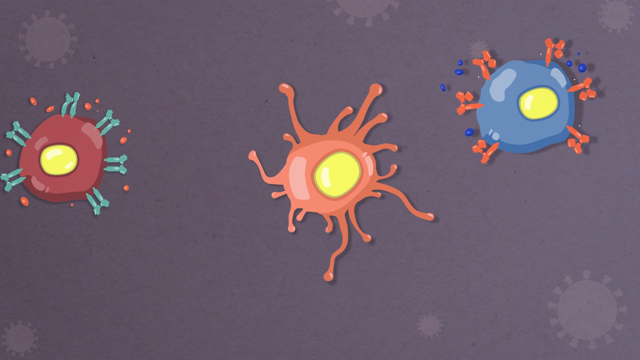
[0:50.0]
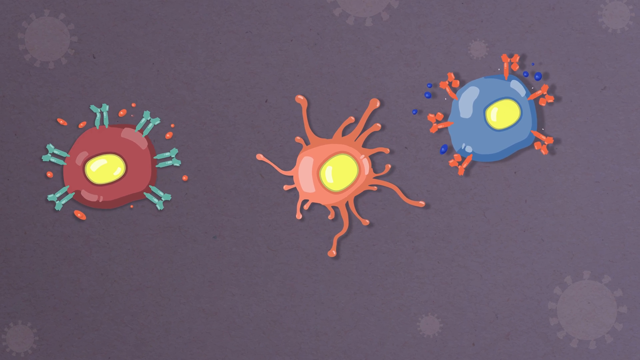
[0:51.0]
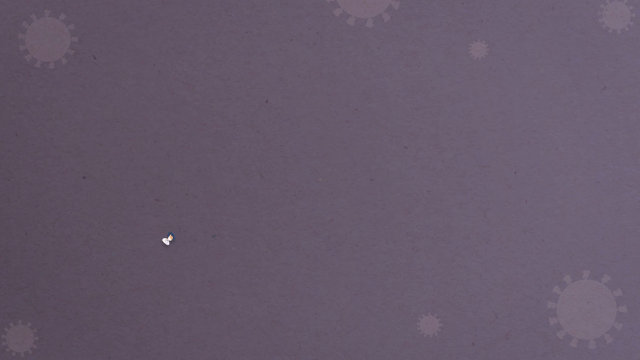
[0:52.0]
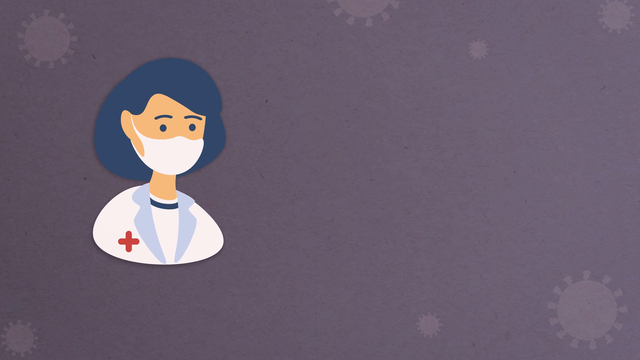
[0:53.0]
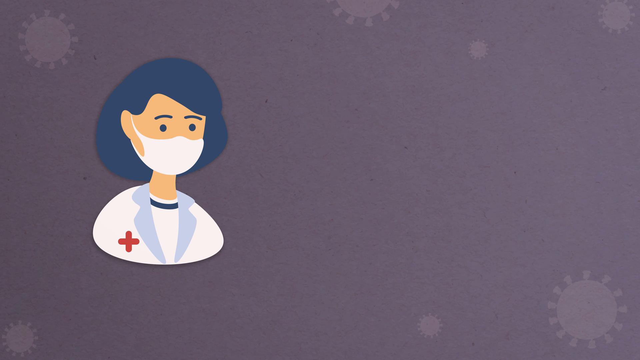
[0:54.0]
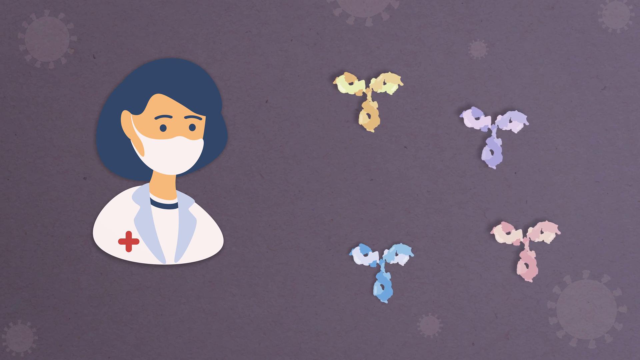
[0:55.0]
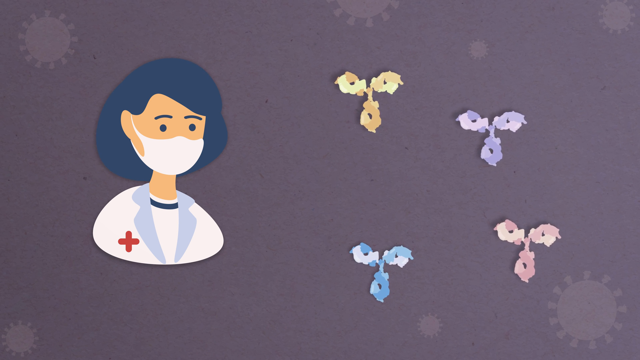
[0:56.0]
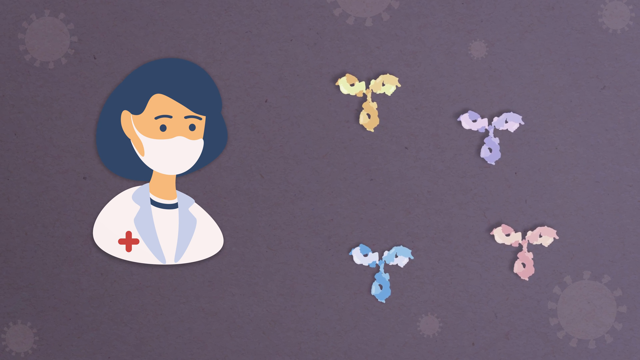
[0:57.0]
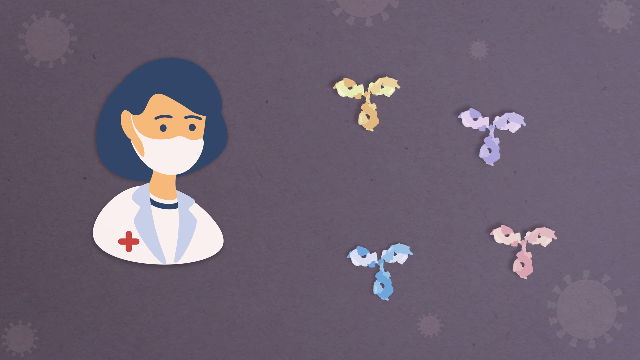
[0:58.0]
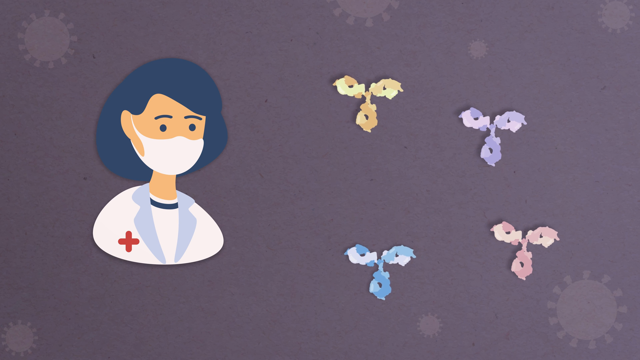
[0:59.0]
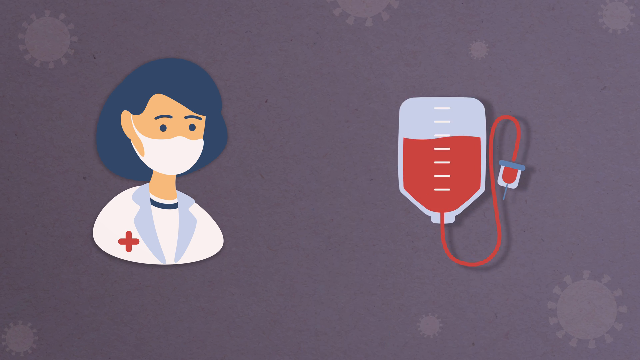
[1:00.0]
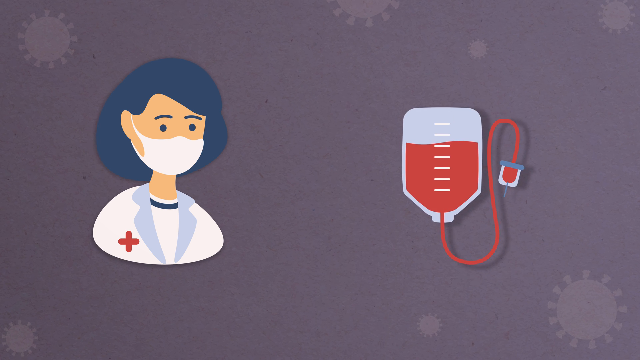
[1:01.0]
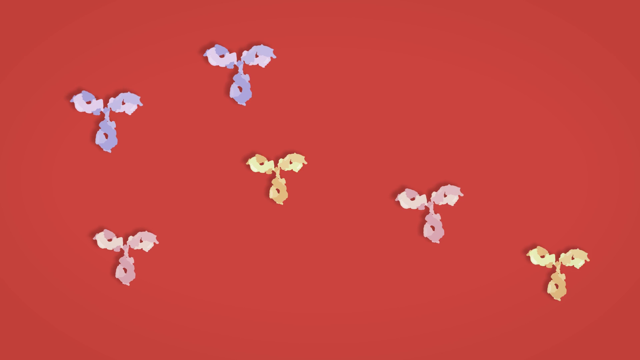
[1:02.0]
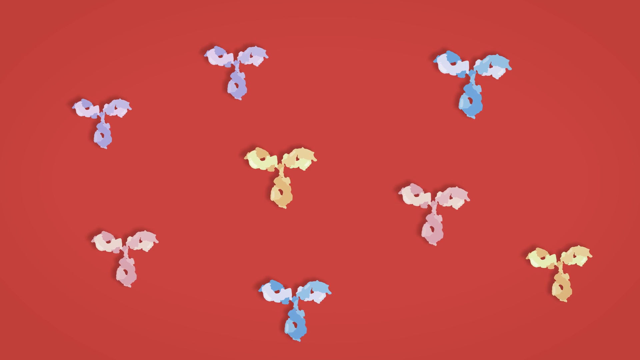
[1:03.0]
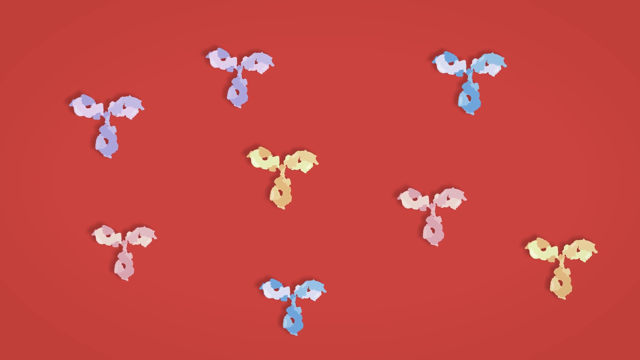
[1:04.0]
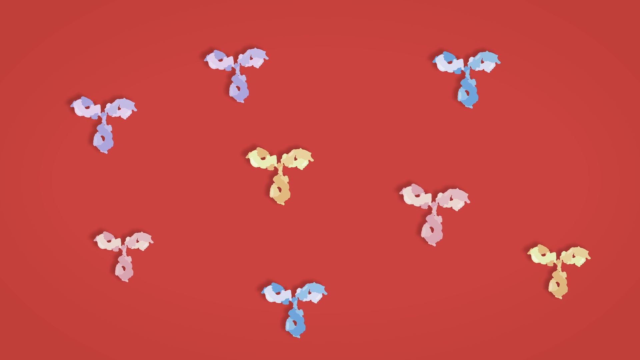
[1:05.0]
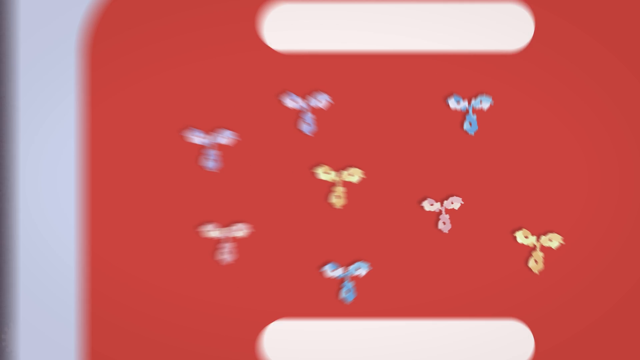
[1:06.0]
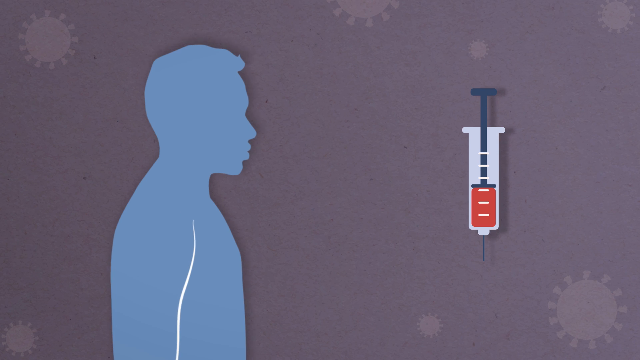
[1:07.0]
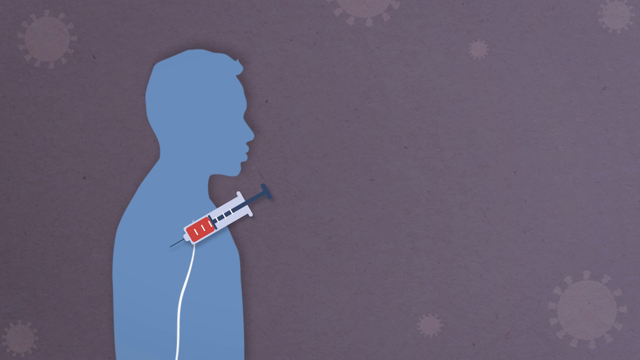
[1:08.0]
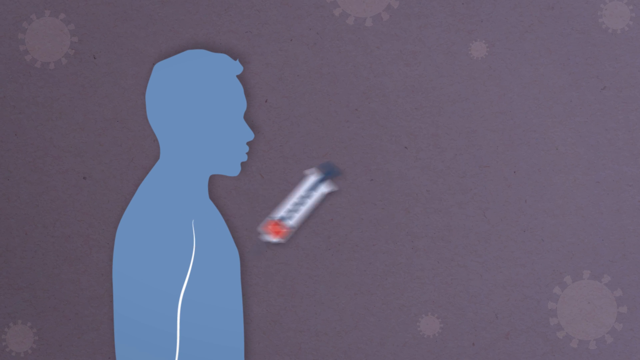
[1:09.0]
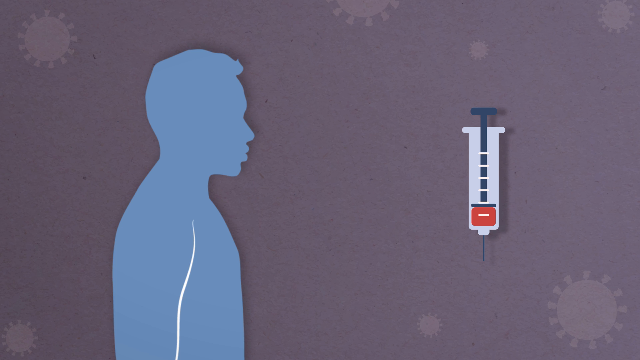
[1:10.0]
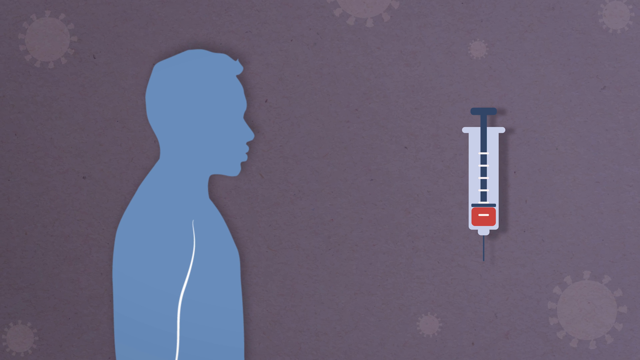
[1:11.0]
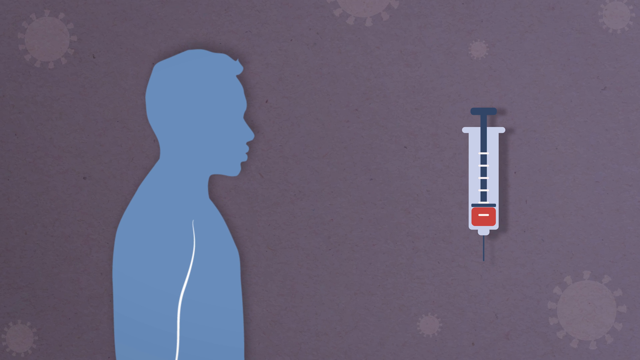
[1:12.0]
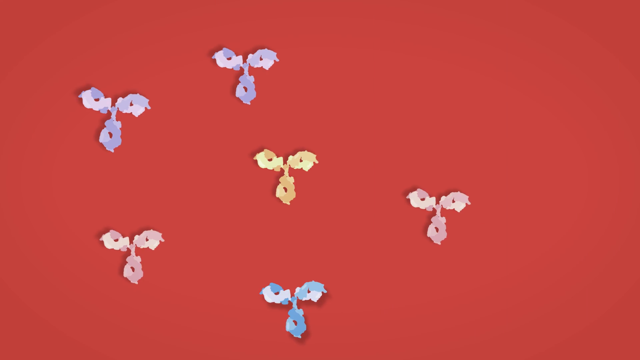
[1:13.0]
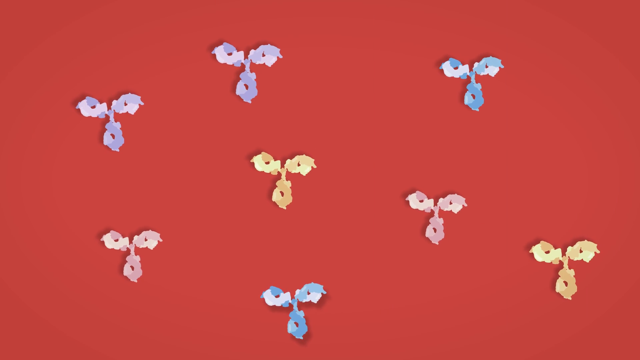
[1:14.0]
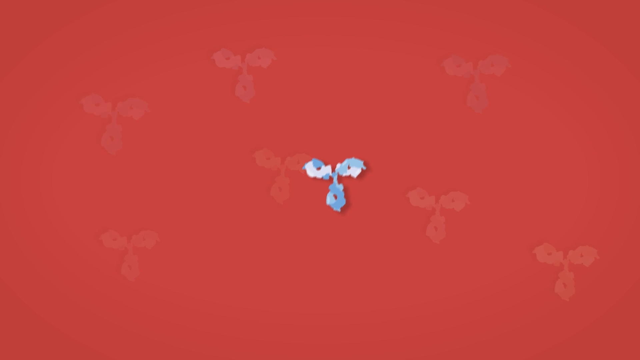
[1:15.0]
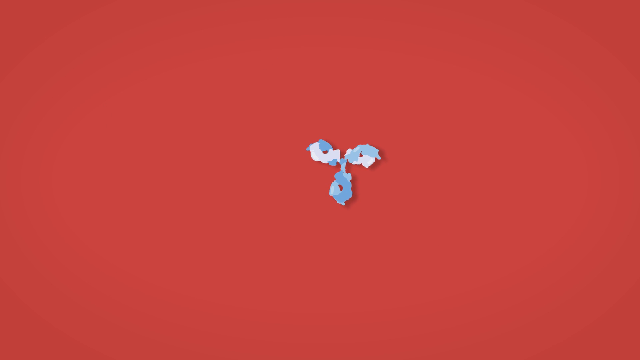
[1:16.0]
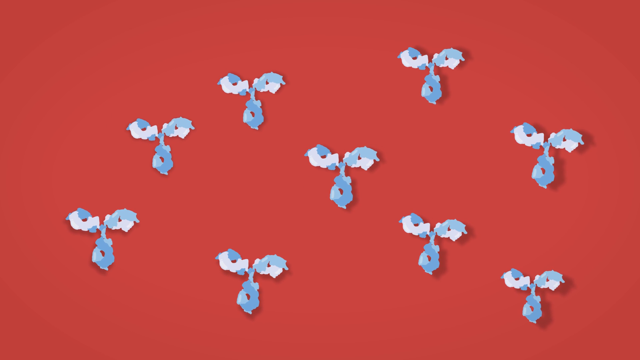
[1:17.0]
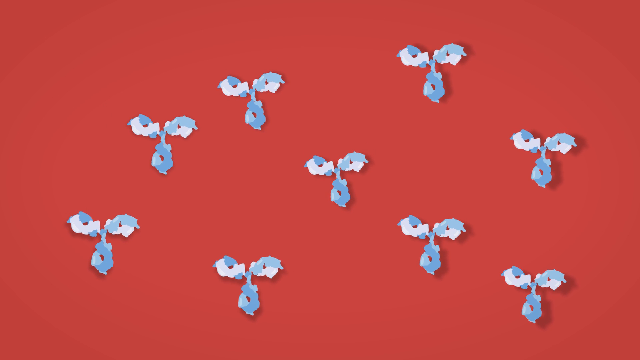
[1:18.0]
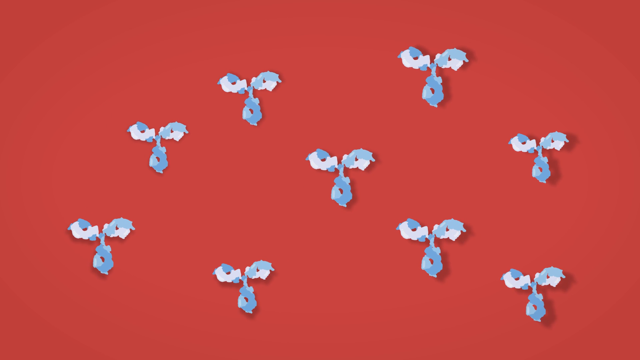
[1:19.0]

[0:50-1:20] Different cells float around the screen. One is maroon, with a green part coming from it that has a yellow center; the cell in the center of the screen is orange with a yellow center; and the last cell is bluish with a yellow center. The cells move around the screen. The next screen shows an animated image of a nurse or doctor, more than likely a doctor since she wears a white jacket. She has dark black hair and dot-like eyes, wears a face mask, and has a red cross on the breast of her jacket. On the right-hand side of the screen are shapes of different colors, such as yellow, purple, pink and blue. A blood bag pops up on the screen, and those shapes appear on the next screen. They go into a syringe, and the syringe gives a shot to a blue silhouette-like figure. The colored shapes are possibly antibodies.